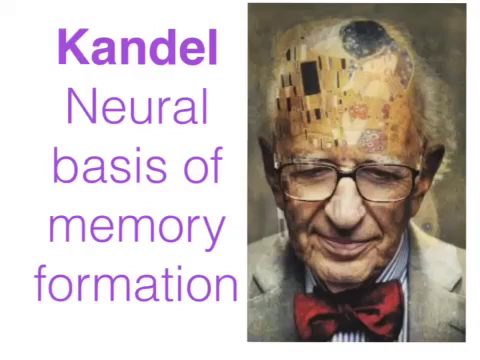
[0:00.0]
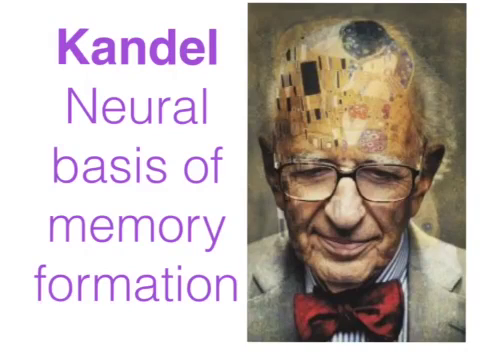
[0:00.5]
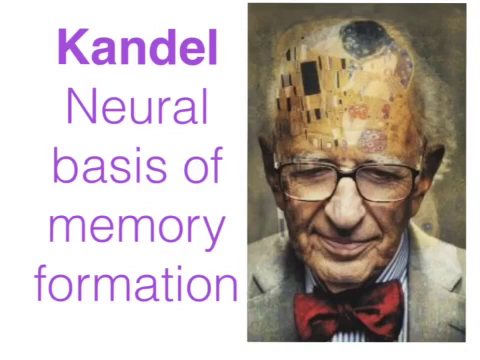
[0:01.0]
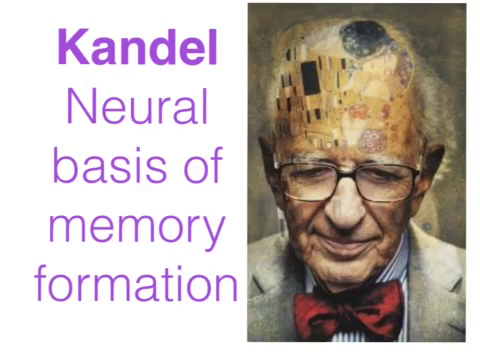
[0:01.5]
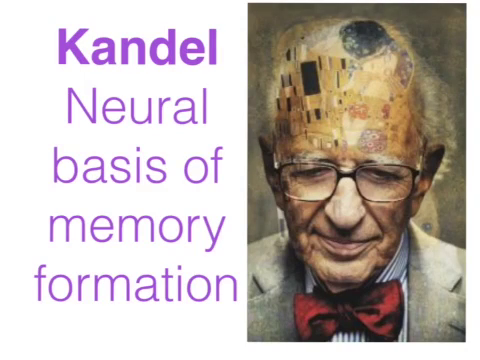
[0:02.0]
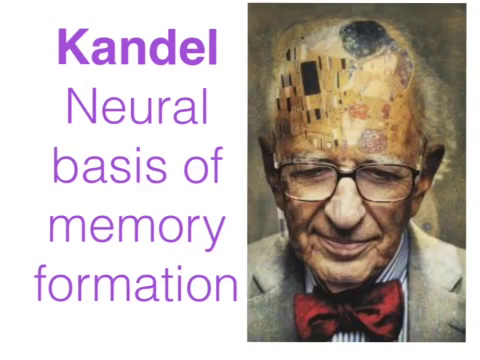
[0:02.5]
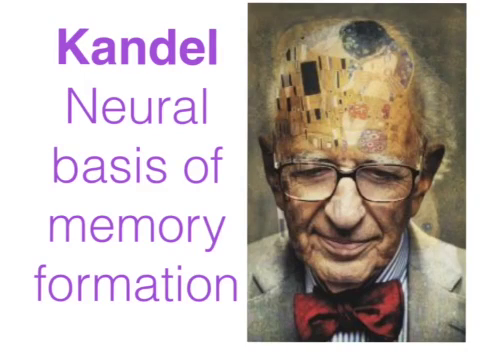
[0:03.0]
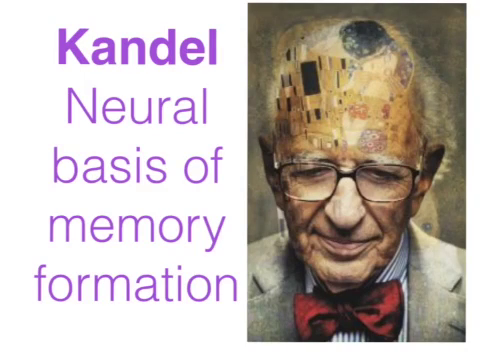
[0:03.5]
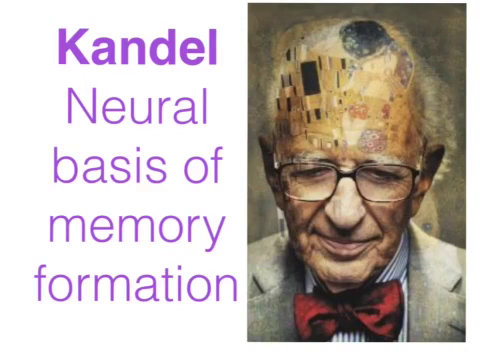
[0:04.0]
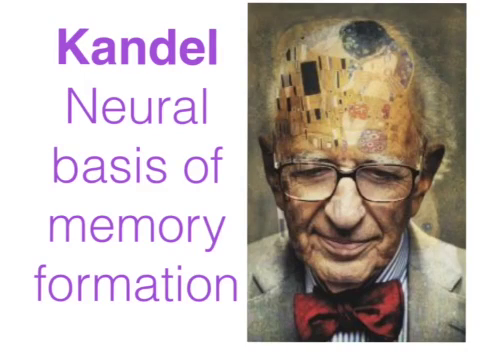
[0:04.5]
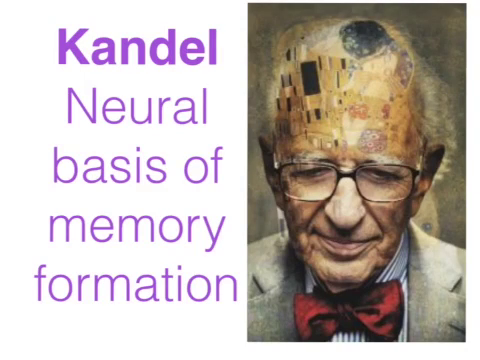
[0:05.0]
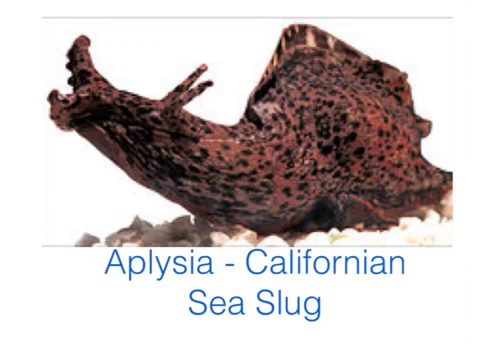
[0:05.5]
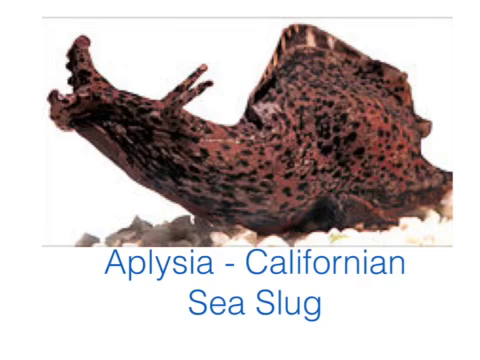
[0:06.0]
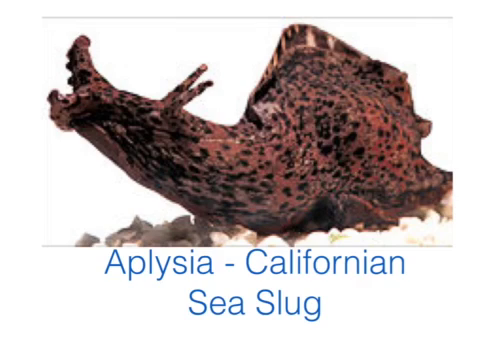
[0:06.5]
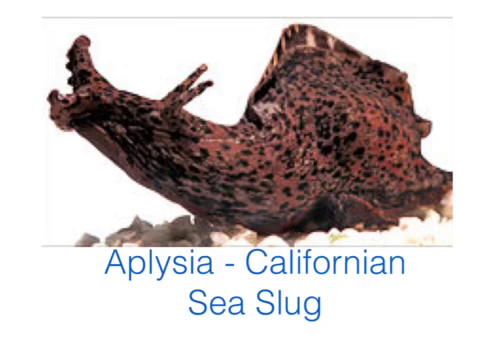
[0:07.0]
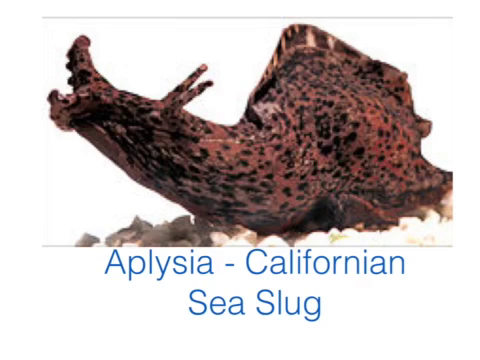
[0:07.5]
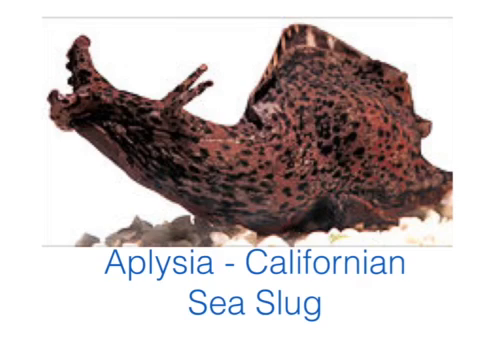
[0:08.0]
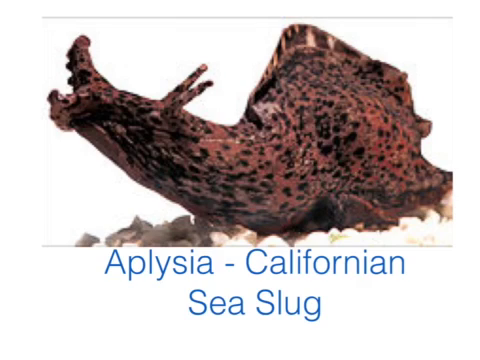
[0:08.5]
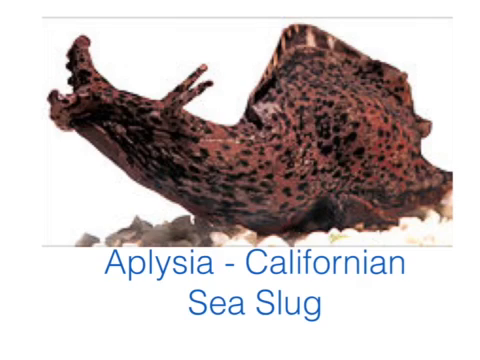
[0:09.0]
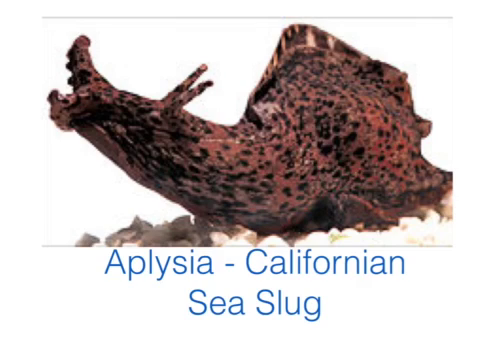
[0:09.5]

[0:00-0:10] The video begins with a split screen. On the left side, against a white background, the word "KANDEL" appears in purple at the top, and below it the text reads "Neural Basis of Memory Formation." On the right side is an image of an old man who is smiling slightly; he faces the camera but looks down. He wears glasses, a striped collared shirt, a tan jacket and a red bow tie. His hairline is receding and the visible hair is white. Across his forehead and the dome of his head is a transparent overlay that looks like computer programming. The image then flips to a picture of a California sea slug, shown above its scientific name, "Aplysia." The slug is brown with black spots.